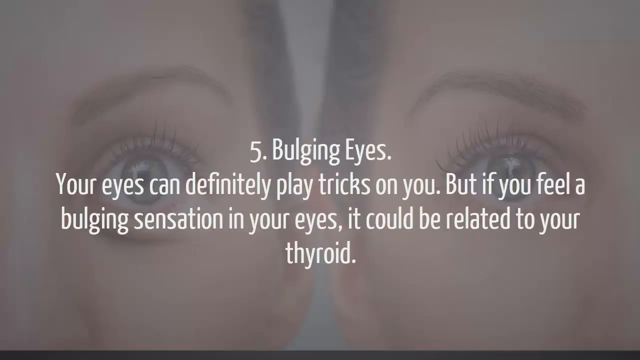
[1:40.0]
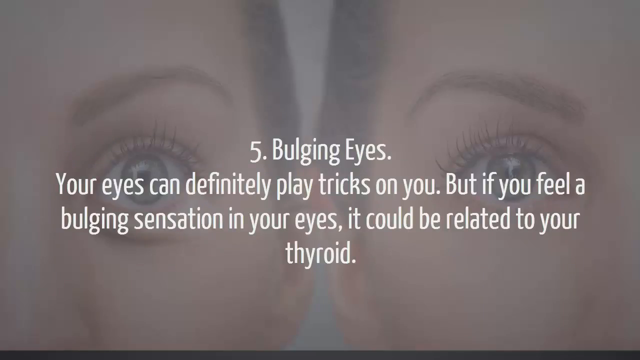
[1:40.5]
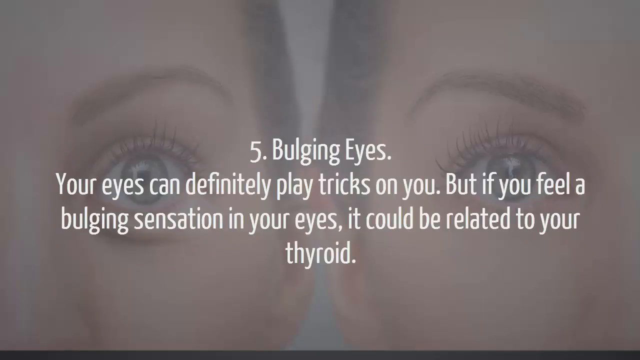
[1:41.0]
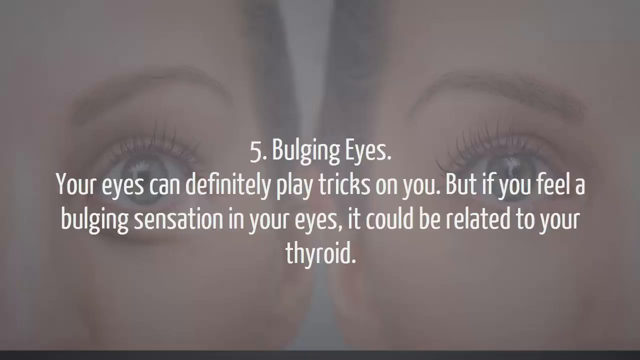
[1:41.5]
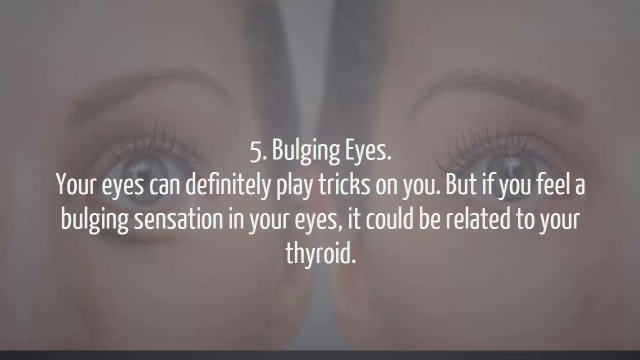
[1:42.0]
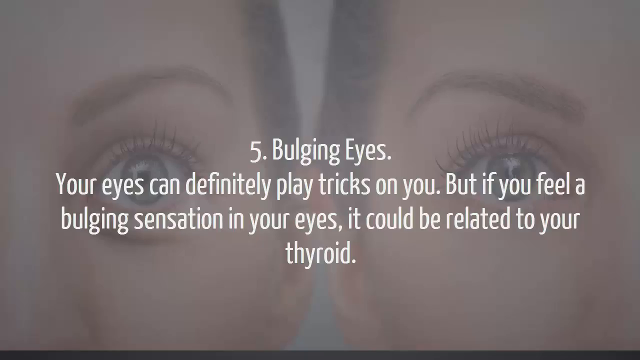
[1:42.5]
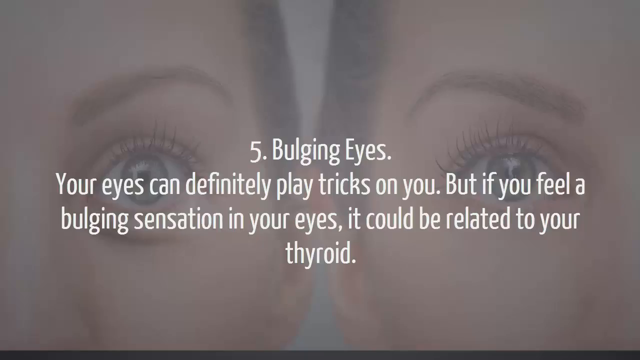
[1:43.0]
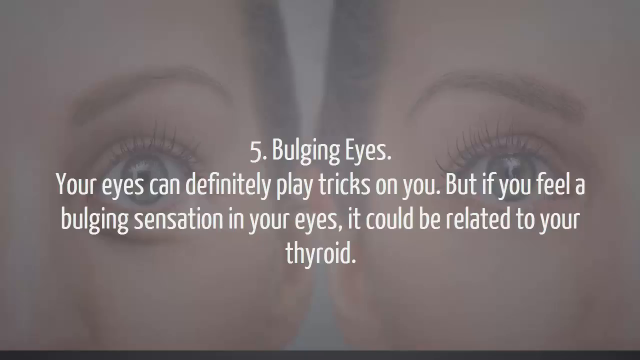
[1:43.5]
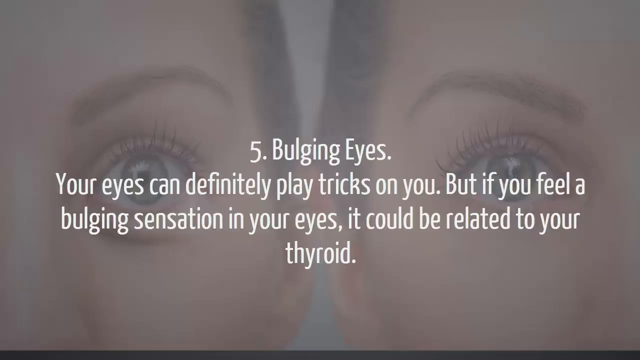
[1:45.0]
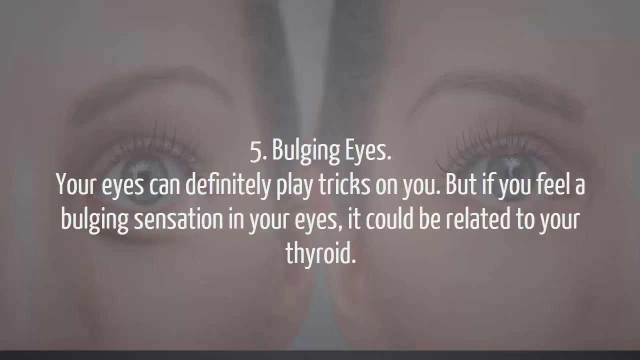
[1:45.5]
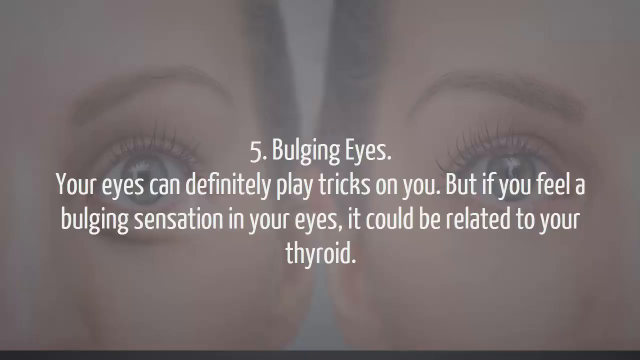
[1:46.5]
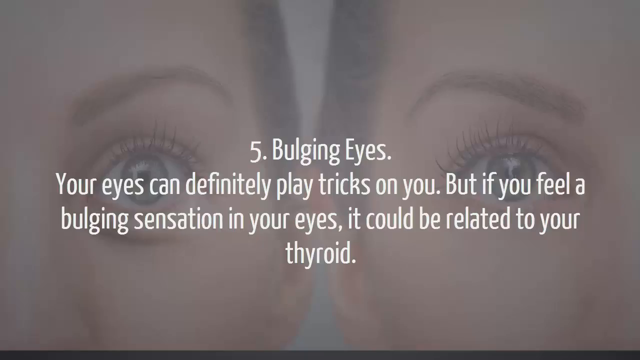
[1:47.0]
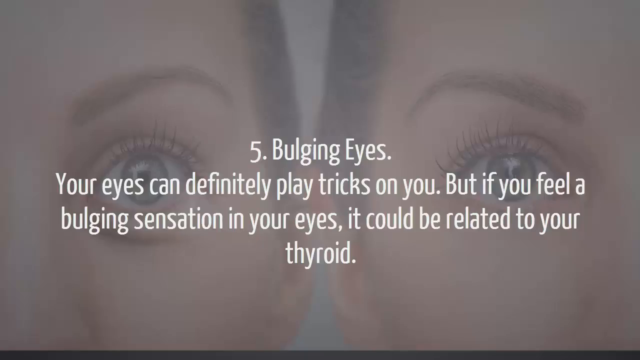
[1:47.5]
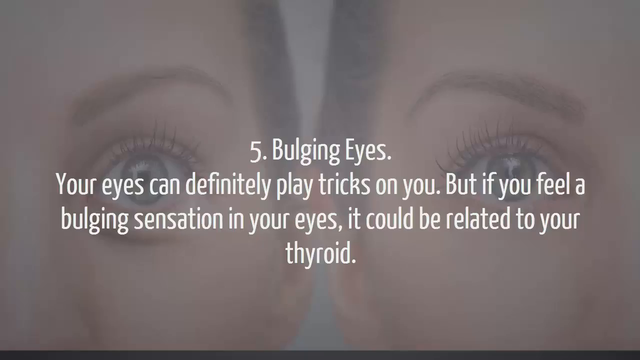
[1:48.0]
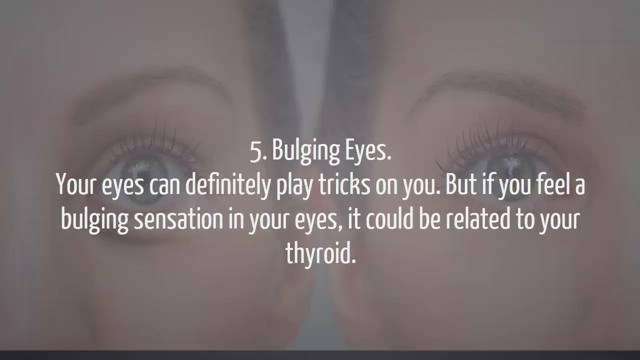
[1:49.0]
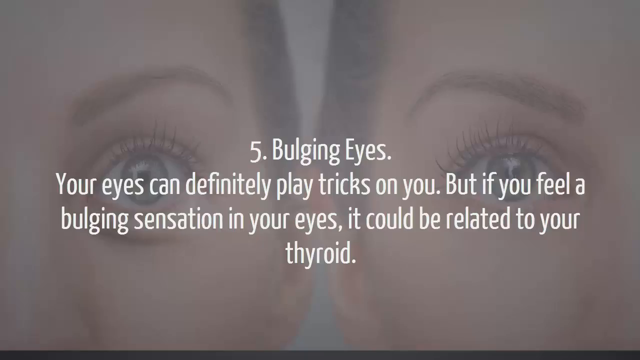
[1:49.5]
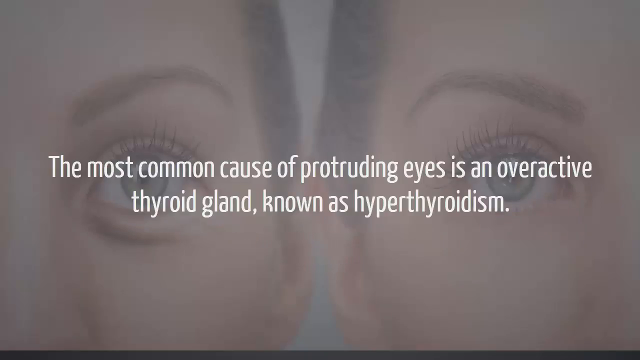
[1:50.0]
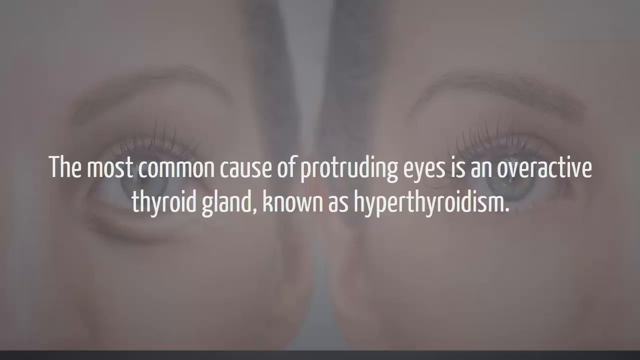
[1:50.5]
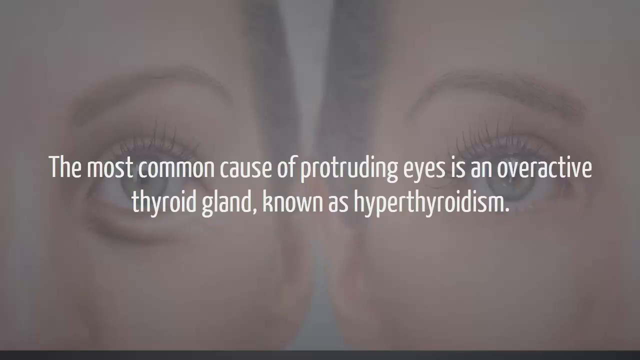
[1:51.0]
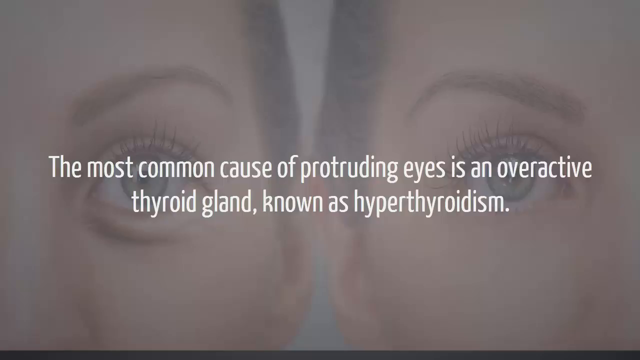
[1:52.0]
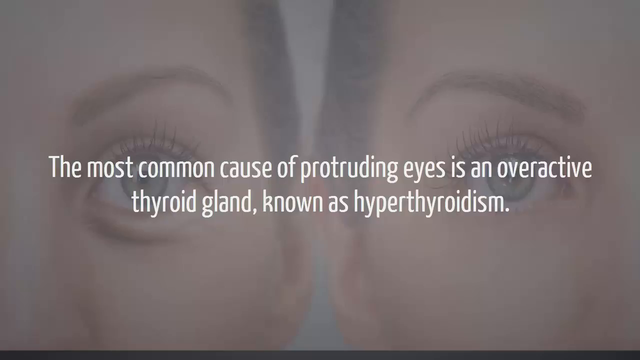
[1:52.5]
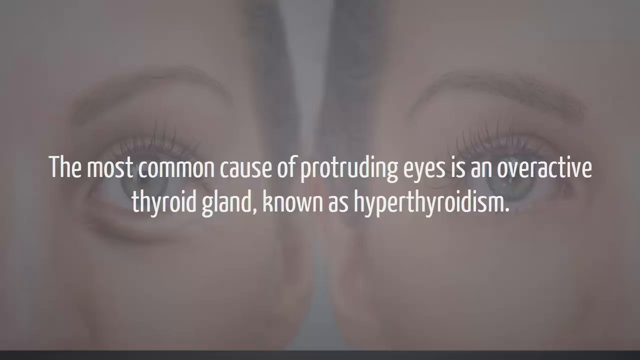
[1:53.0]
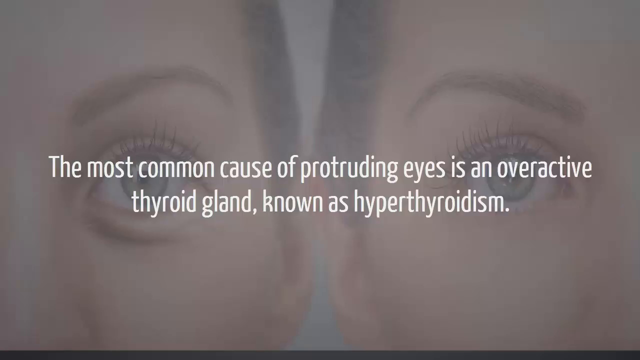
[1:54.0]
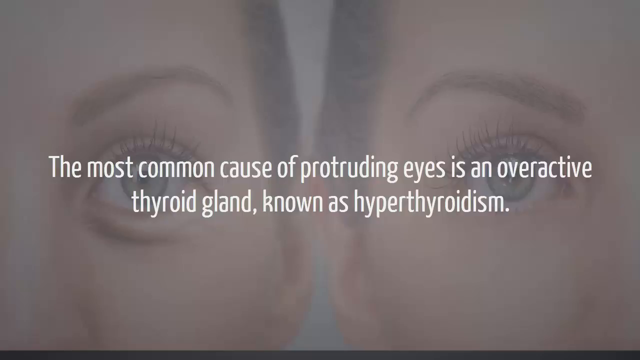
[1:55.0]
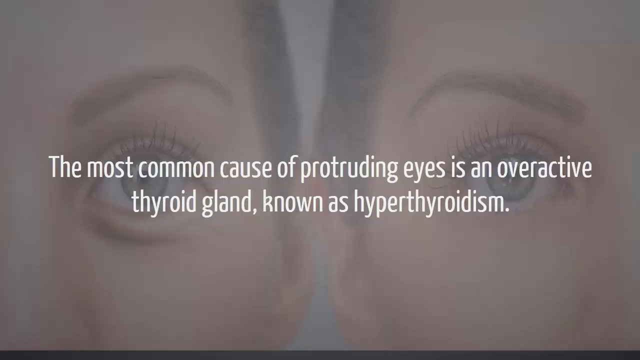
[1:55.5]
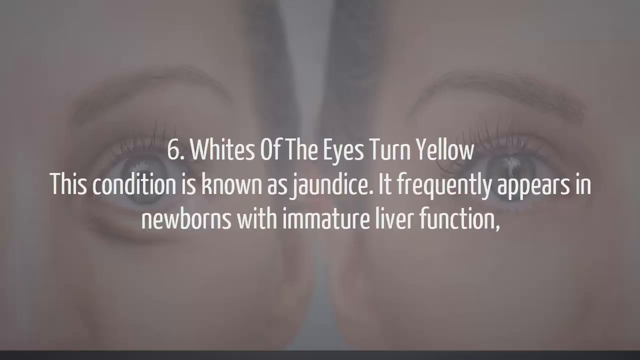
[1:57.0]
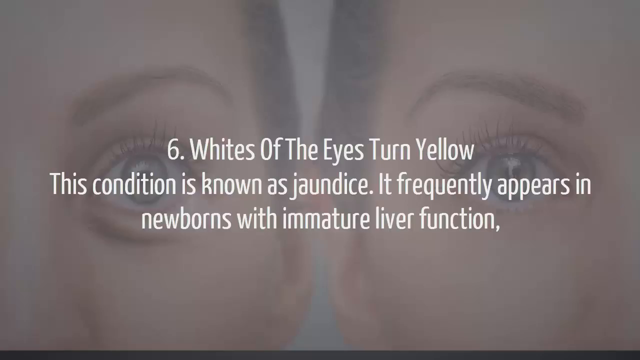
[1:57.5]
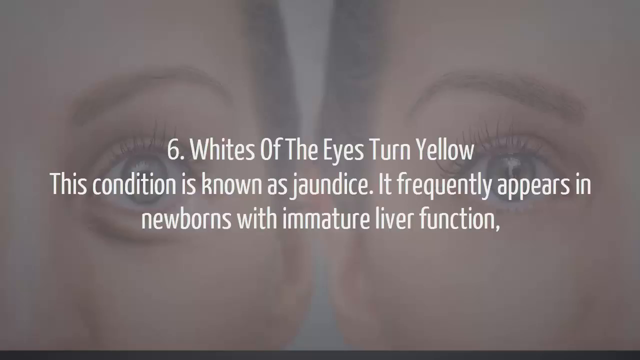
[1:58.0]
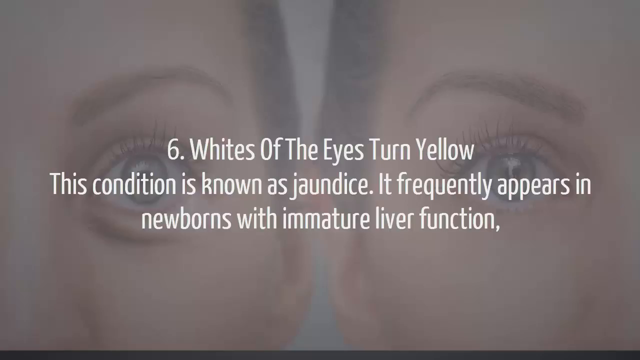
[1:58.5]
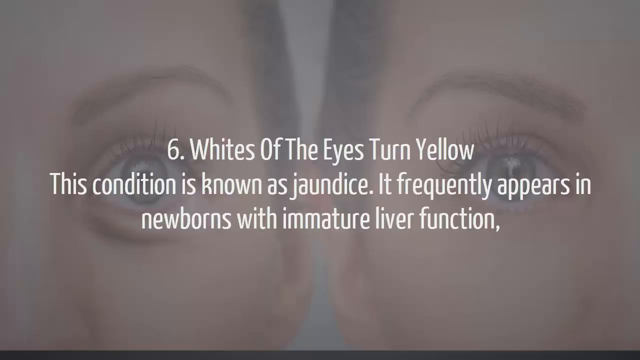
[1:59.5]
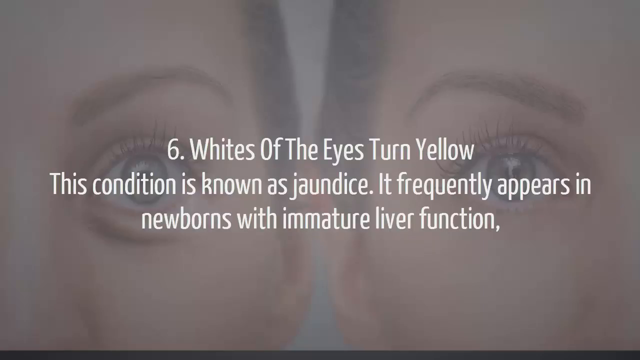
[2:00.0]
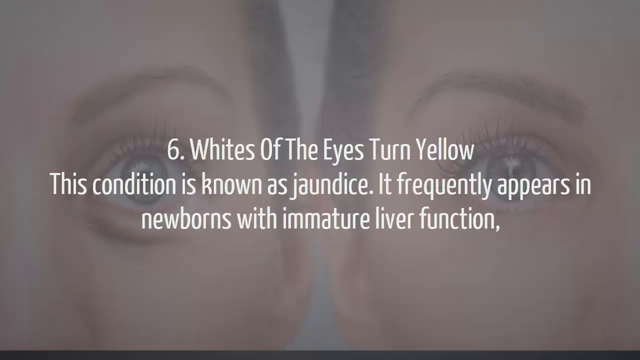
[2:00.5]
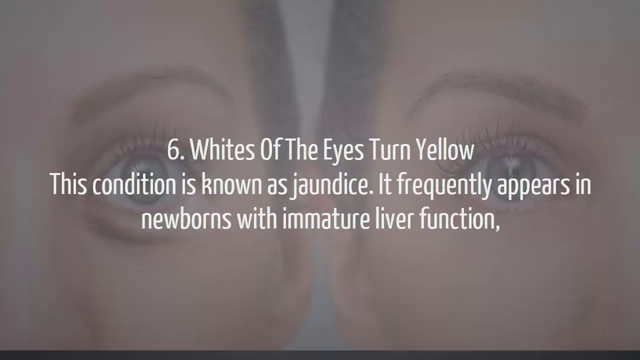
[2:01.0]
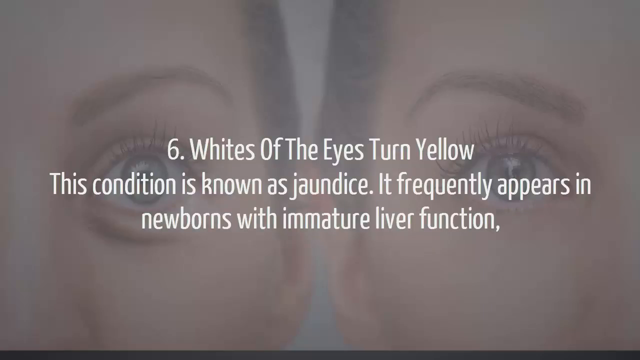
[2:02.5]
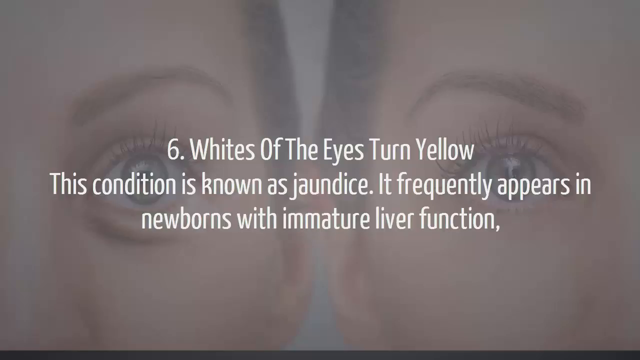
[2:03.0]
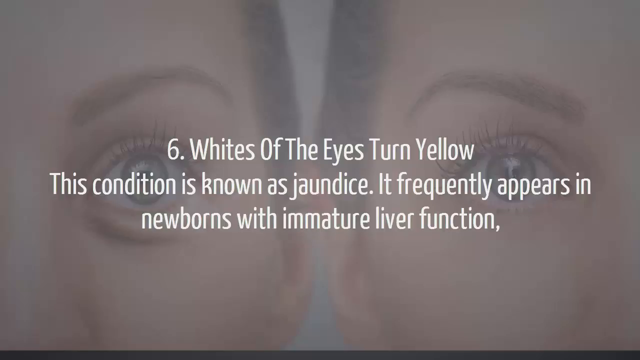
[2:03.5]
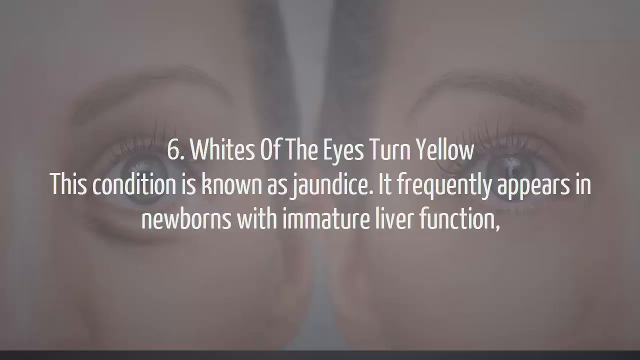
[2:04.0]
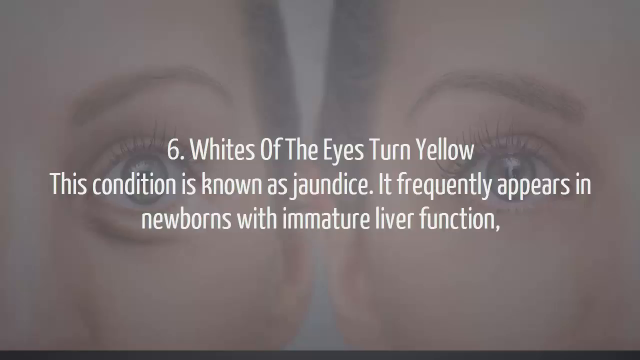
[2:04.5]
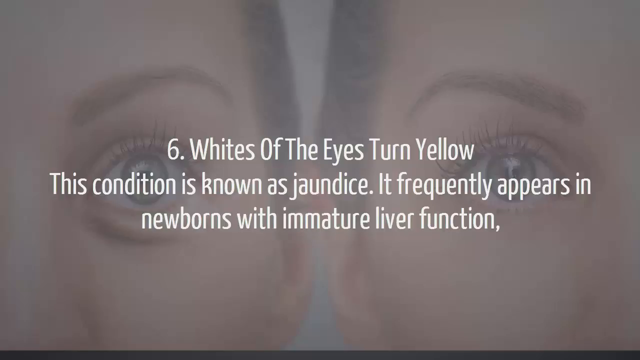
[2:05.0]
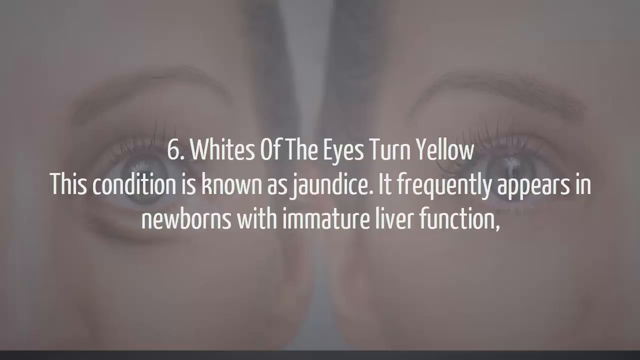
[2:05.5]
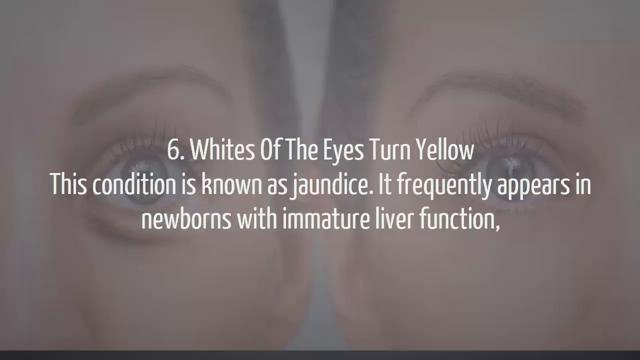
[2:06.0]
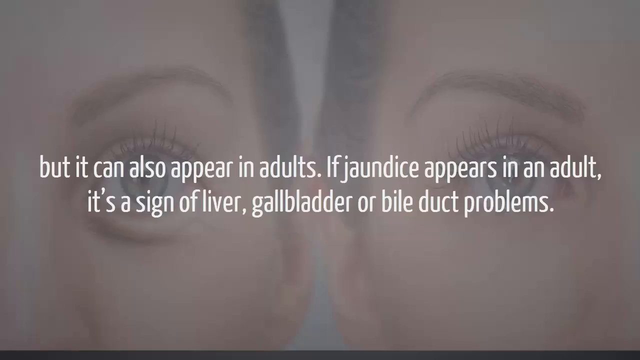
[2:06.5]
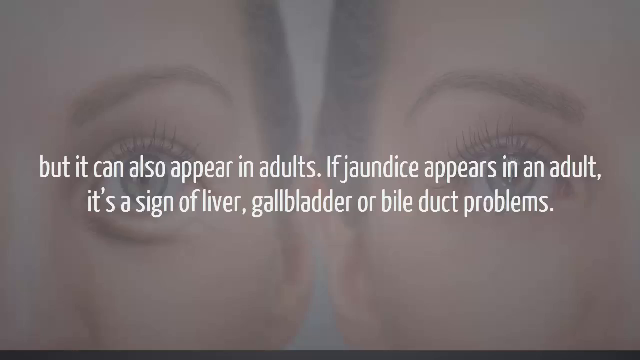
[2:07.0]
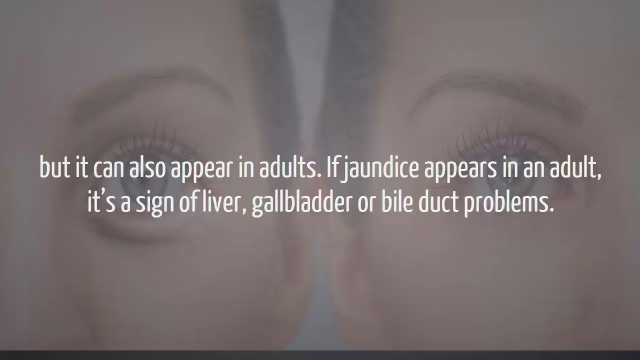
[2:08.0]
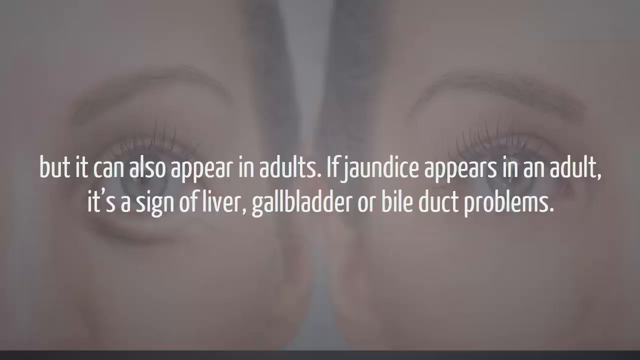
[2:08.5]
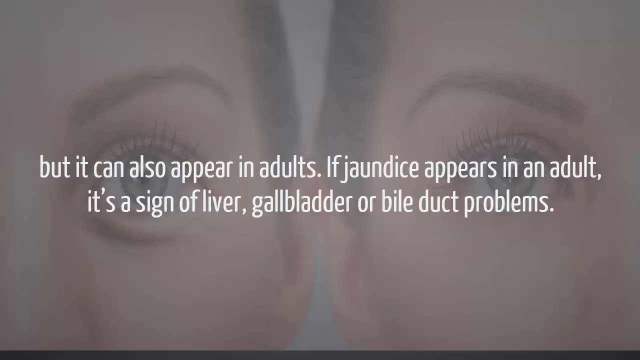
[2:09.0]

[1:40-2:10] An image of two people is in the background, with only the part of each face from the nose over to the ear visible. In the center of the screen is a number five with text reading: "Five, bulging eyes. Your eyes can definitely play tricks on you, but if you feel a bulging sensation in your eyes, it can be related to your thyroid. The most common cause of protruding eyes is an overactive thyroid gland known as hyperthyroidism." Then number six appears: "Six, whites of the eye turn yellow. This condition is known as jaundice. It frequently appears in newborns with immature liver function." Further text about jaundice reads: "Jaundice can also appear in adults. If jaundice appears in an adult, it's a sign of liver, gallbladder, or bile duct problems."